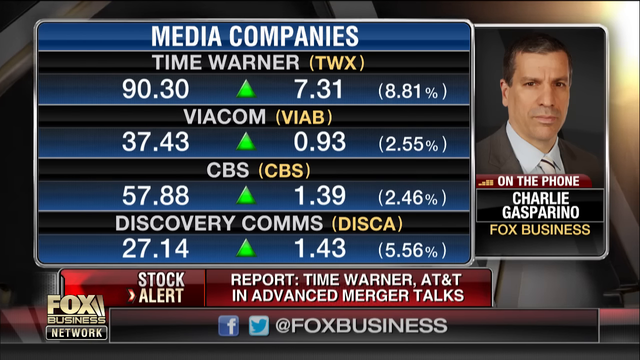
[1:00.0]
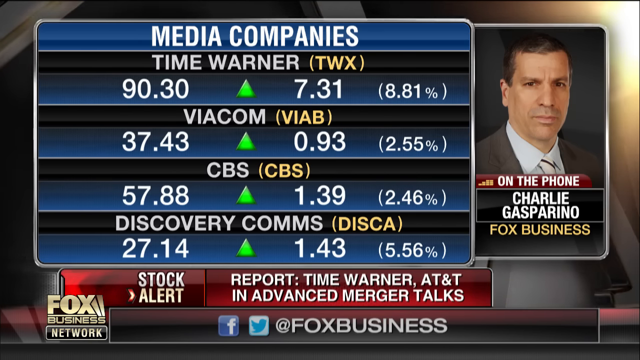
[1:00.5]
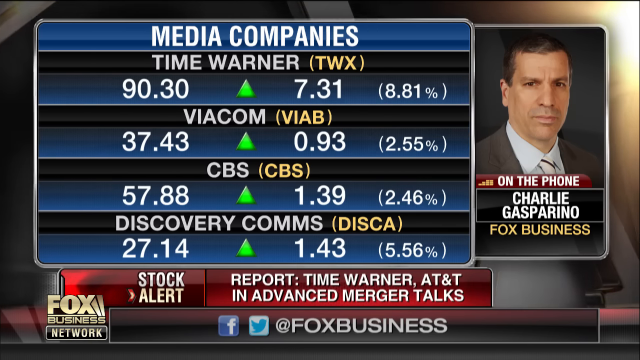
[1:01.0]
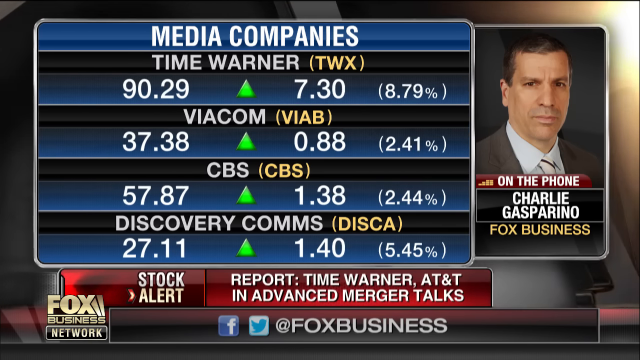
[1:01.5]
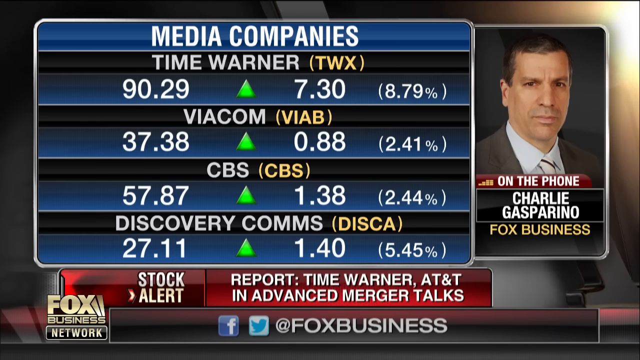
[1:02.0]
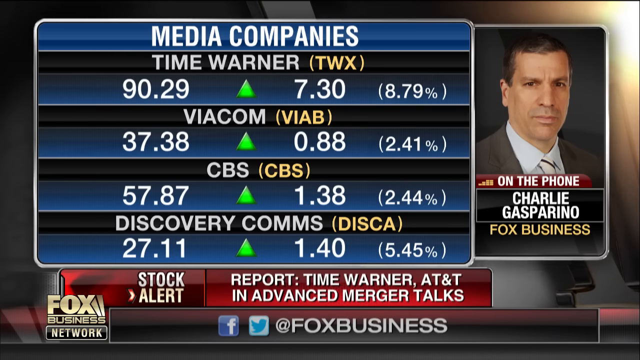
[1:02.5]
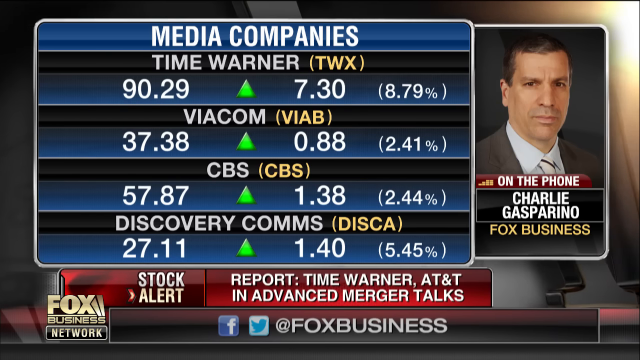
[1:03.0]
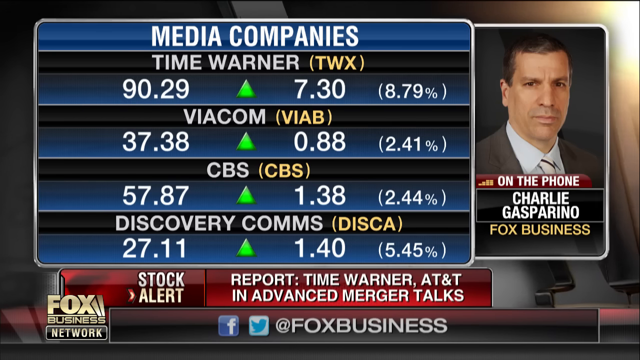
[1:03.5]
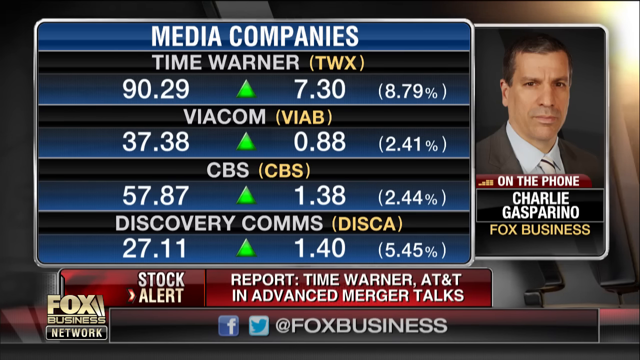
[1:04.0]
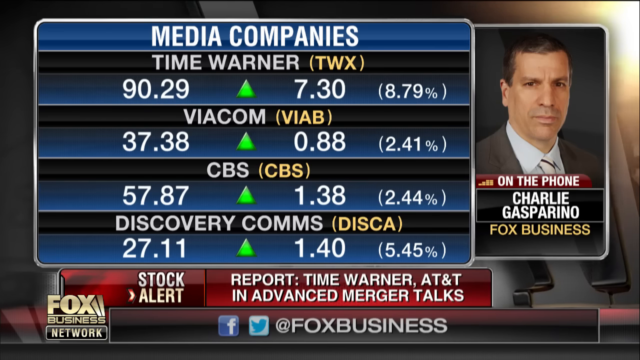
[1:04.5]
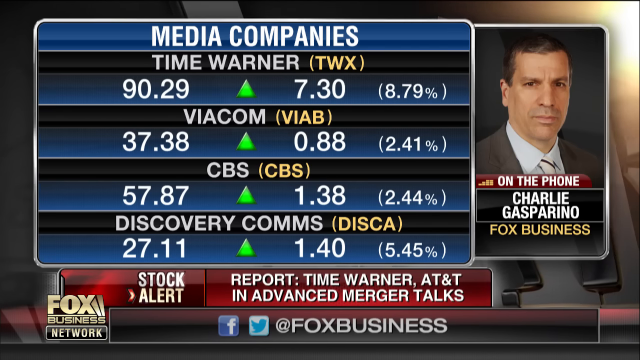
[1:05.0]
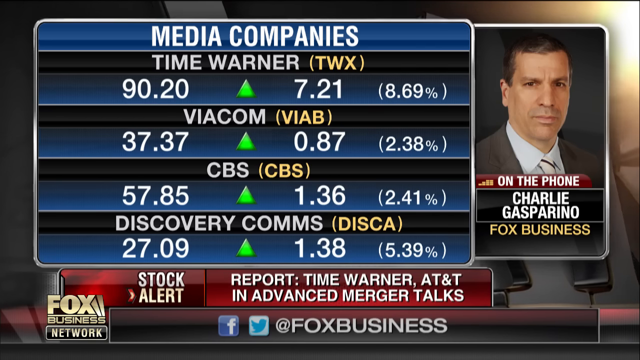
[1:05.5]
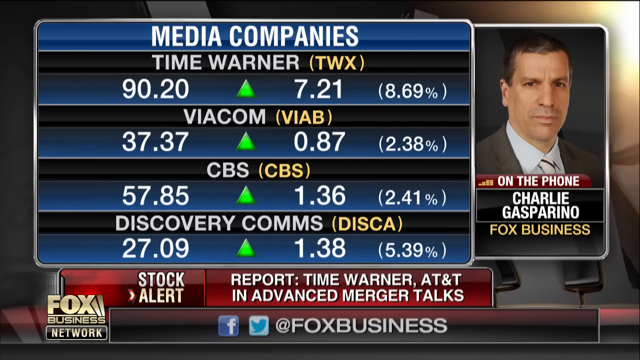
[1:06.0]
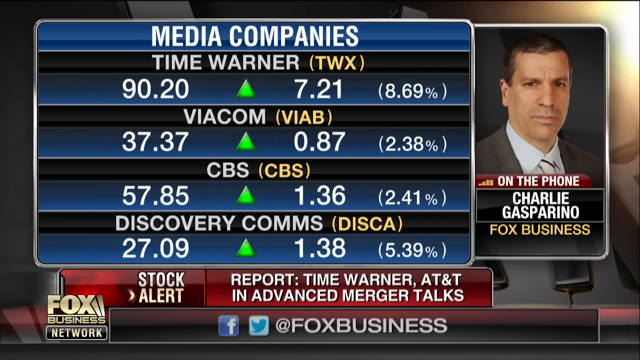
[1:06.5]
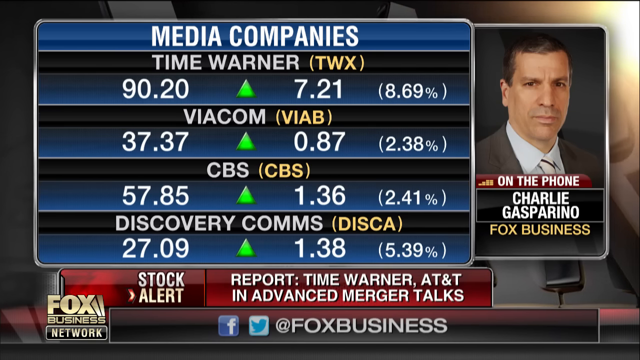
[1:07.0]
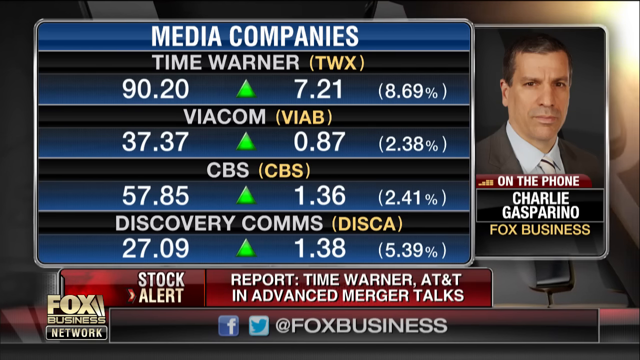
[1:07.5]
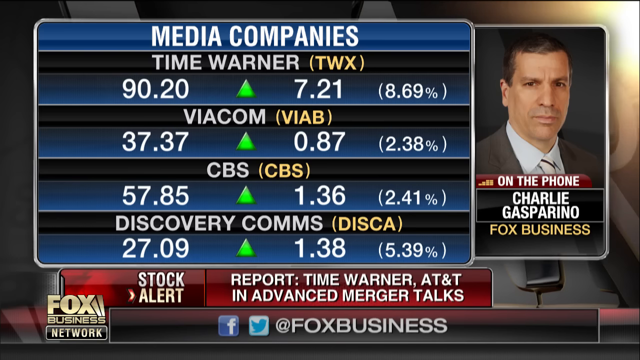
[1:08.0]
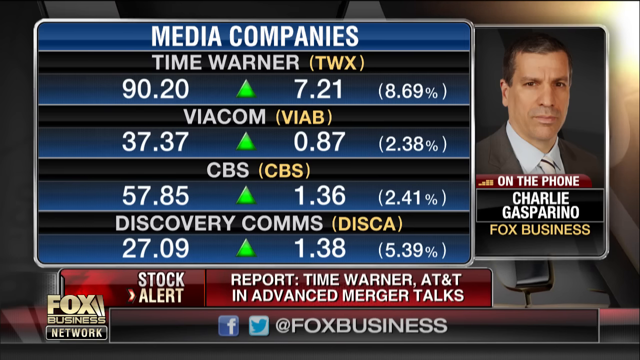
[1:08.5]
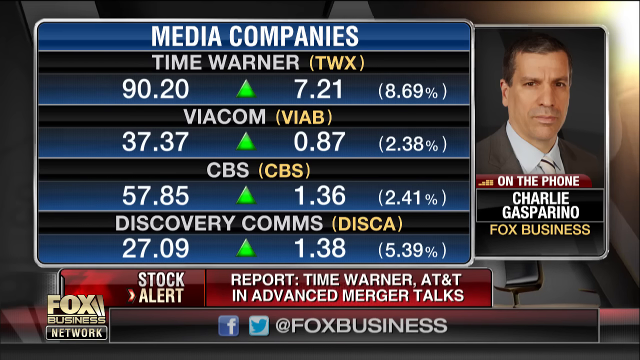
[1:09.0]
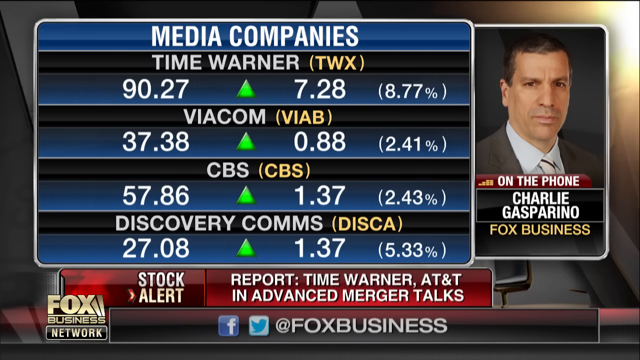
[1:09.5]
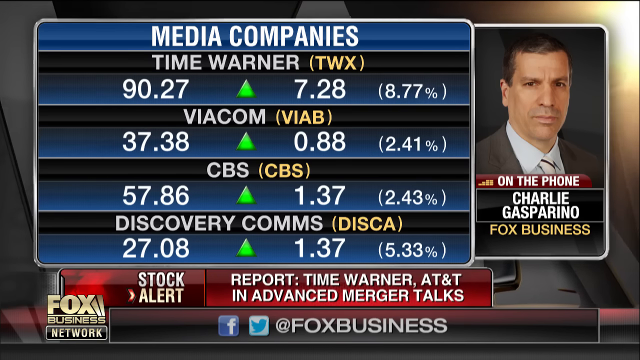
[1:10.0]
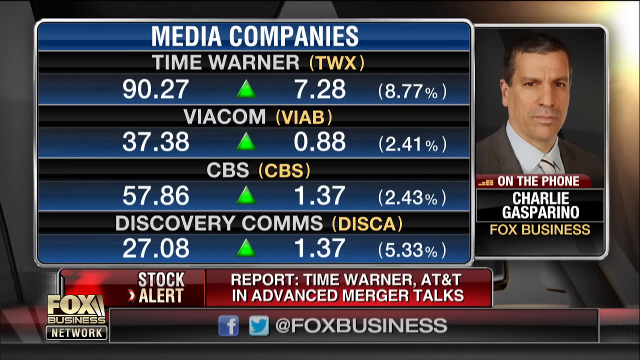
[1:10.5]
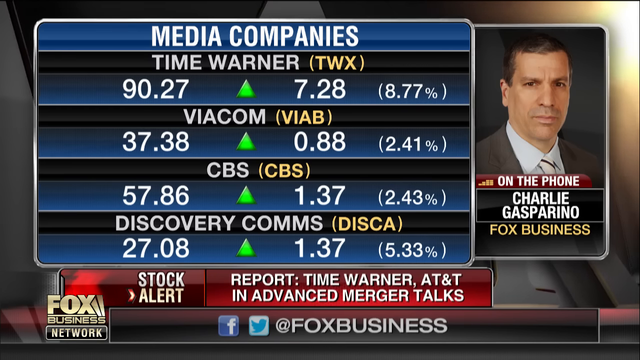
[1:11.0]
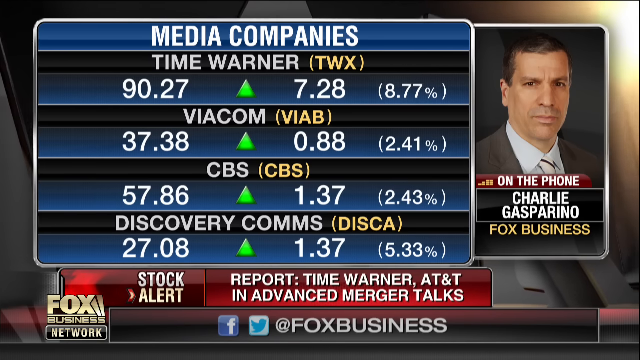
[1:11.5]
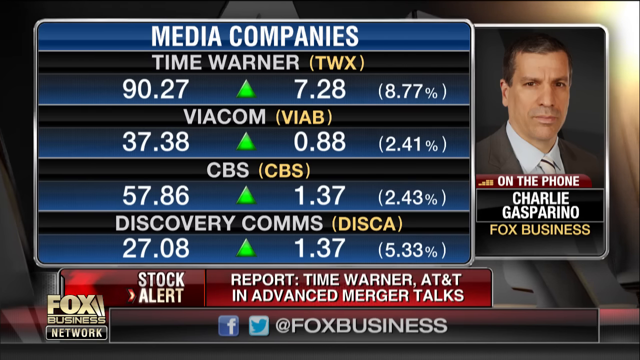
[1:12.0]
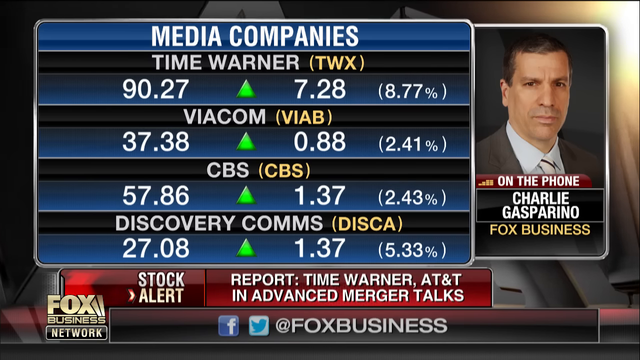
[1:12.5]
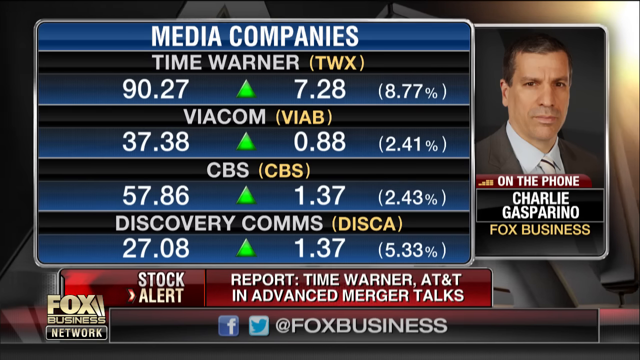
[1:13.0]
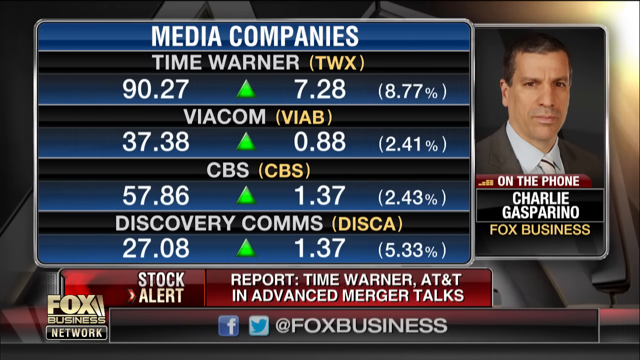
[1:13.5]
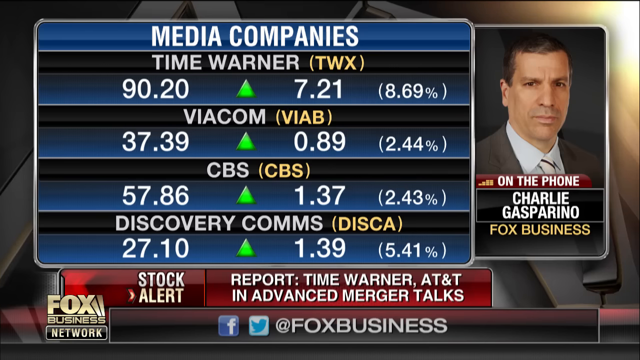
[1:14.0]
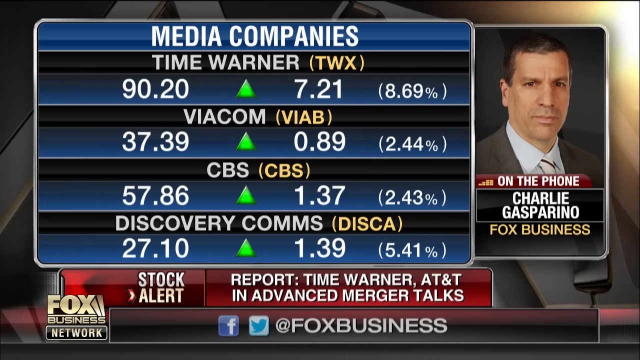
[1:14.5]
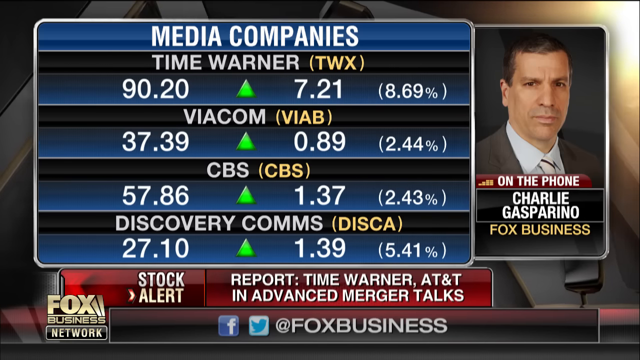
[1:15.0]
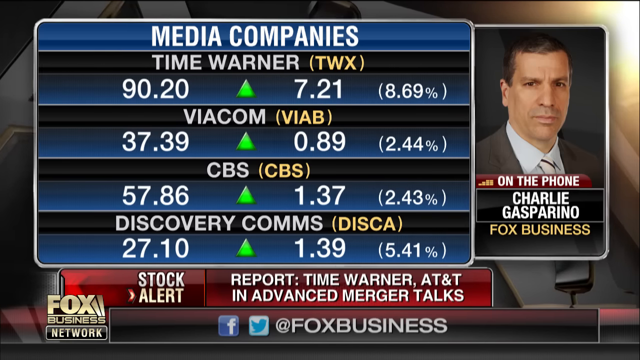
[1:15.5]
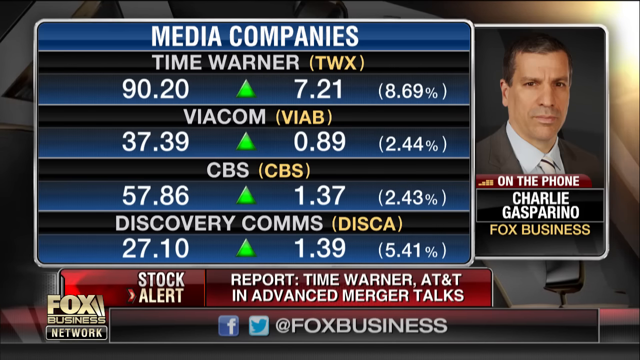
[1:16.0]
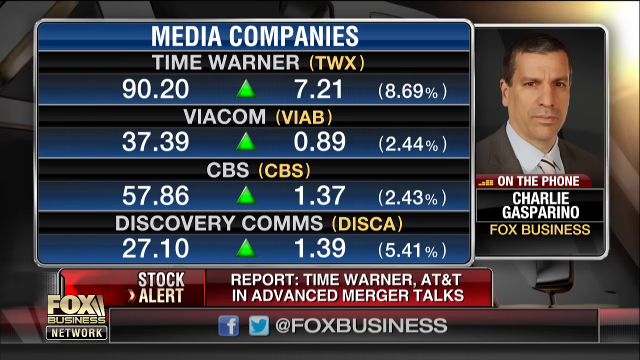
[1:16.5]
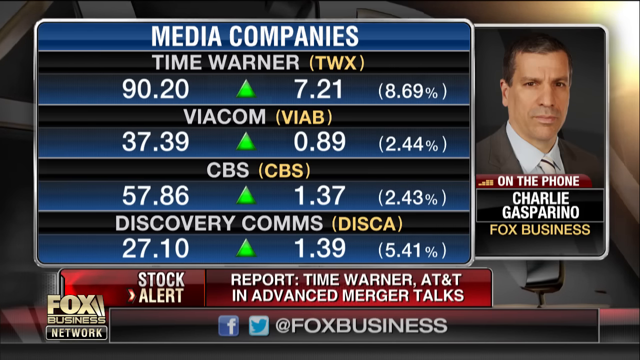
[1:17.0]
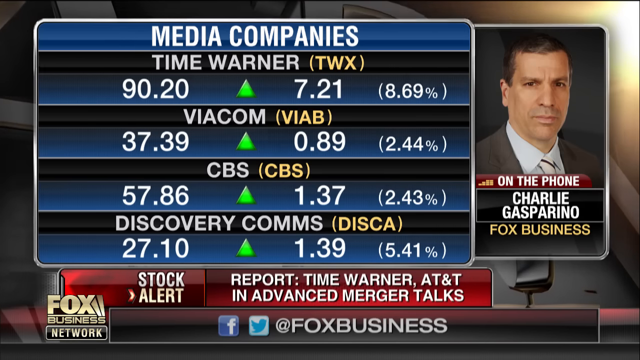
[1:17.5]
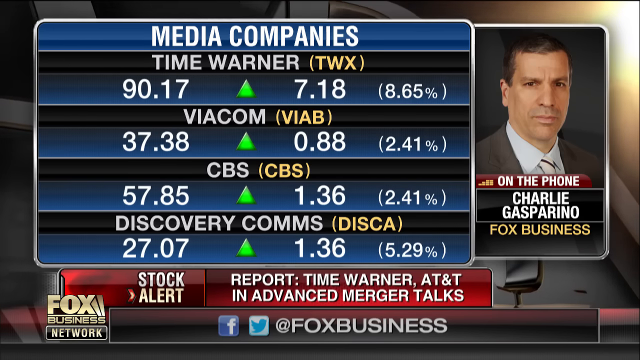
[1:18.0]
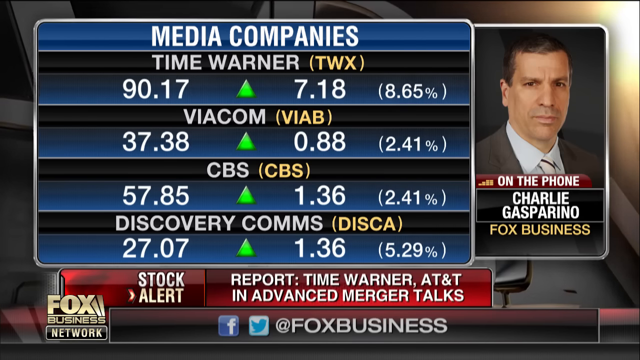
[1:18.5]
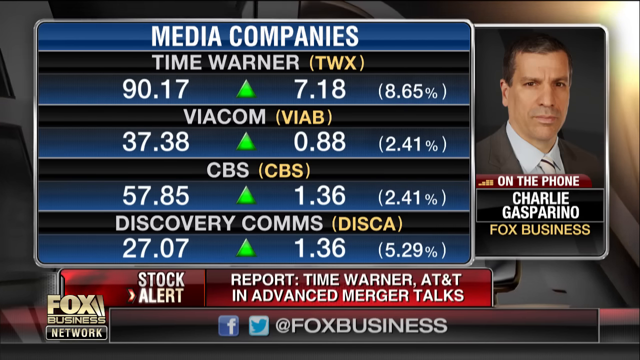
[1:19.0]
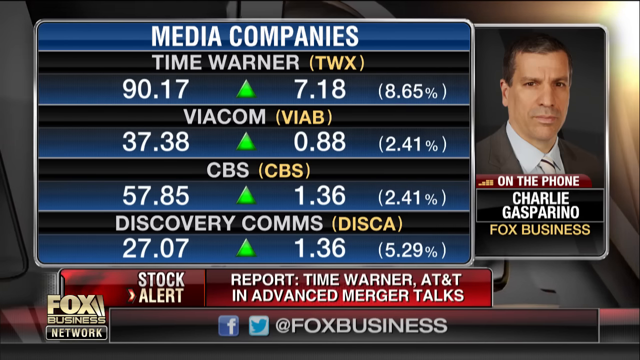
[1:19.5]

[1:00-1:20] The numbers fluctuate to Time Warner 90.29, up 7.30, (8.79%); Viacom 37.38, up 0.88, (2.41%); CBS 57.87, up 1.38, (2.44%); Discovery Comms 27.11, up (1.40%), 5.45%. The words "stock alert" in the upper ticker glisten. The stocks then show Time Warner 90.27, up 7.28, (8.77%); Viacom 37.38, up 0.88, (2.41%); CBS 57.86, up 1.37, (2.43%); Discovery Comms 27.08, up 1.37, (5.33%), and "stock alert" on the upper ticker glistens. Next come Time Warner 90.20, up 7.21, (8.69%); Viacom 37.39, 0.89, (2.44%); CBS 57.86, up 1.37, (2.43%); Discovery Comms 27.10, up 1.39, (5.41%). The stocks fluctuate again to Time Warner 90.17, up 7.18, (8.65); Viacom 37.38, up 0.88, (2.41%); CBS 57.85, up 1.36, (2.41%); Discovery Comms 27.07, up 1.36, (5.29%). The top "stock alert" news ticker glistens and the stocks fluctuate again.